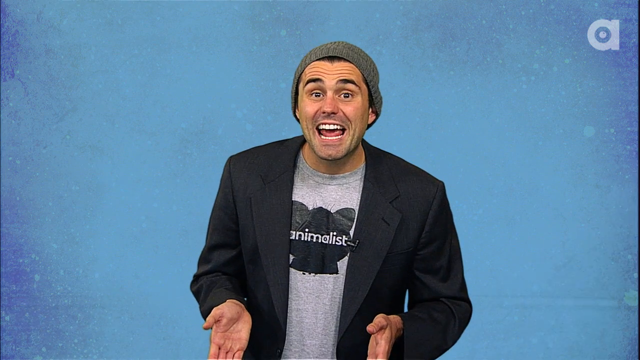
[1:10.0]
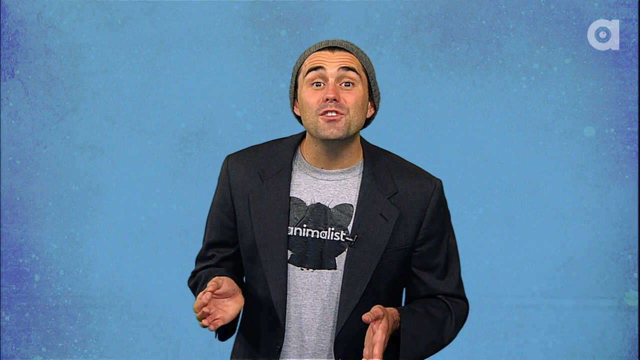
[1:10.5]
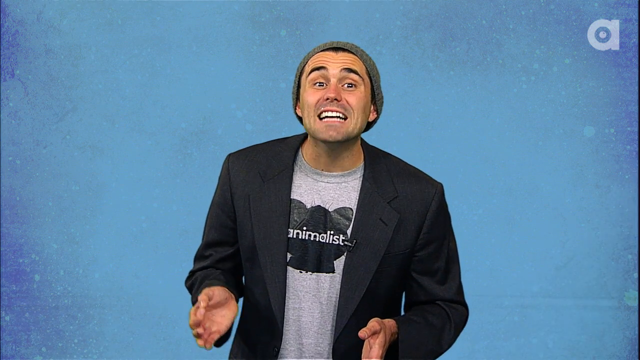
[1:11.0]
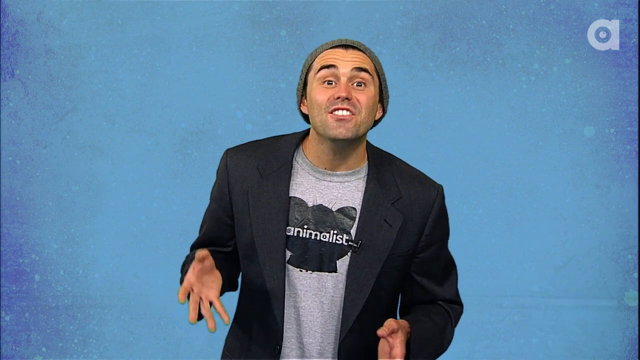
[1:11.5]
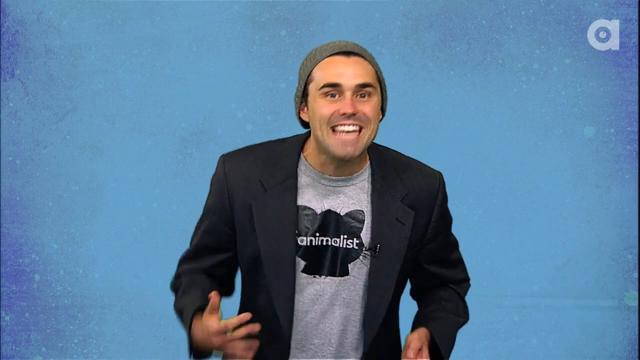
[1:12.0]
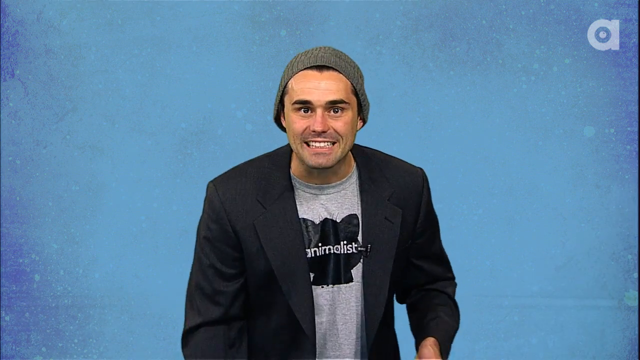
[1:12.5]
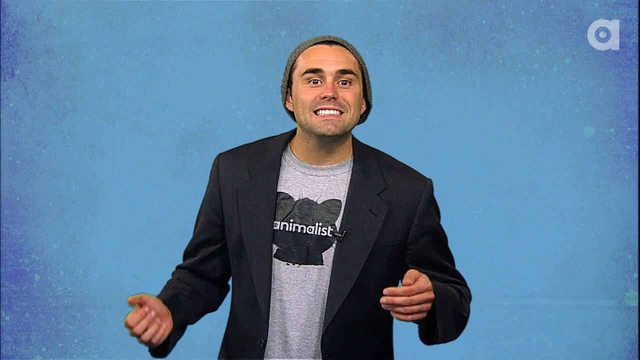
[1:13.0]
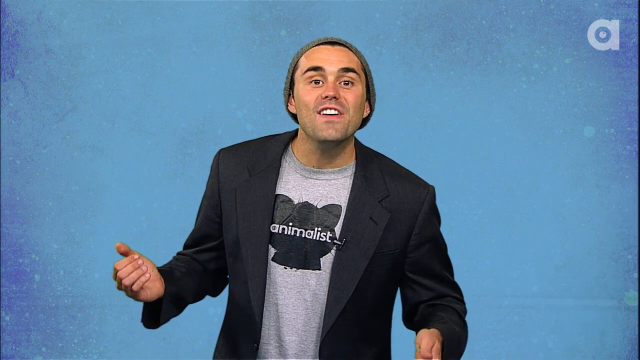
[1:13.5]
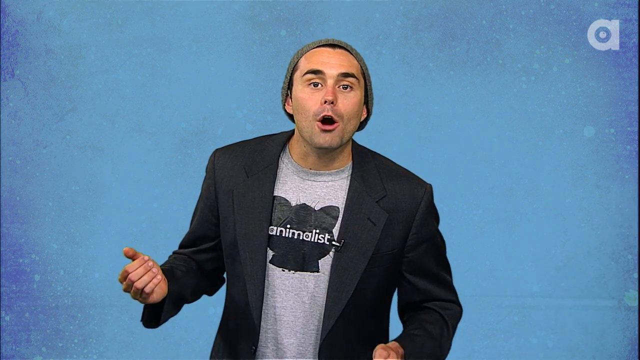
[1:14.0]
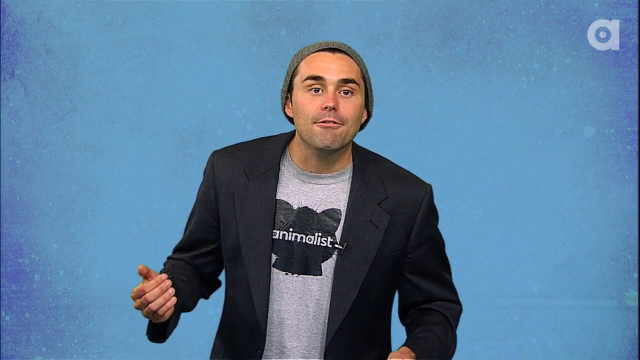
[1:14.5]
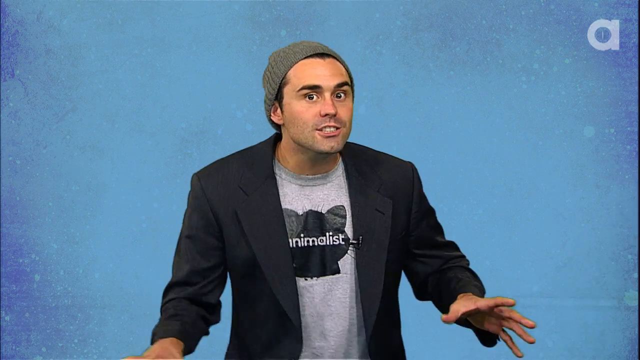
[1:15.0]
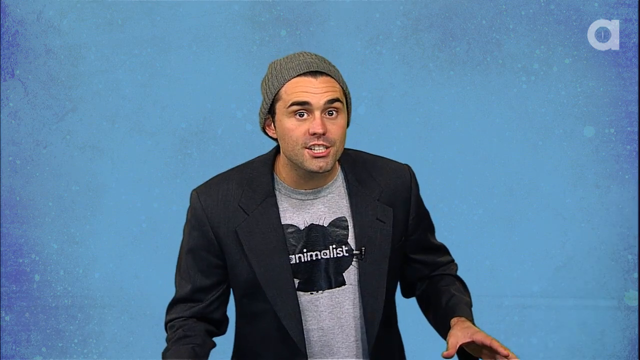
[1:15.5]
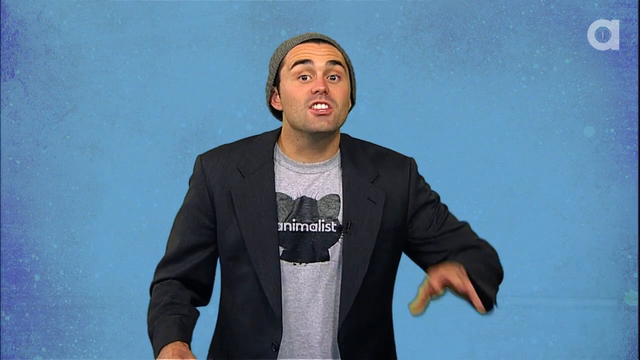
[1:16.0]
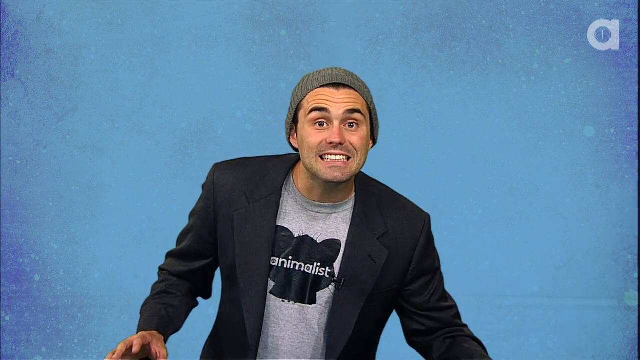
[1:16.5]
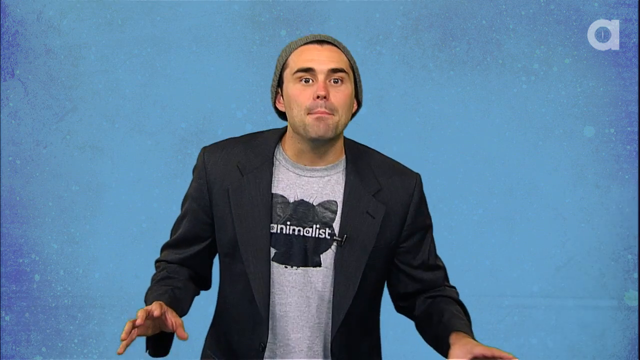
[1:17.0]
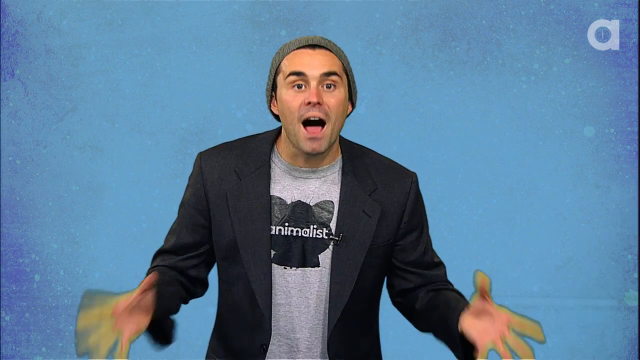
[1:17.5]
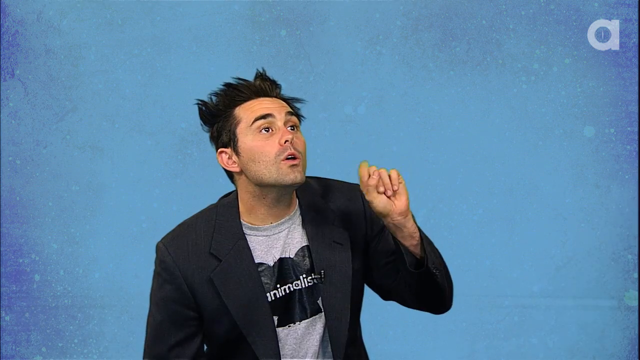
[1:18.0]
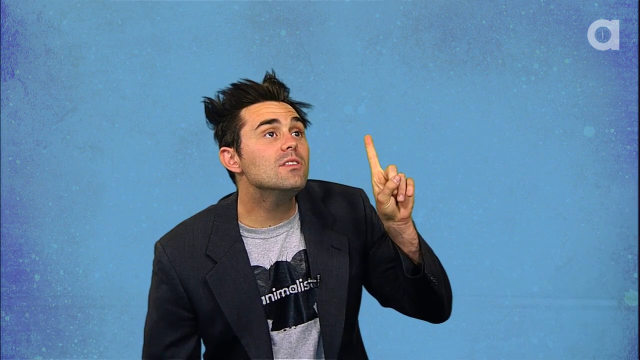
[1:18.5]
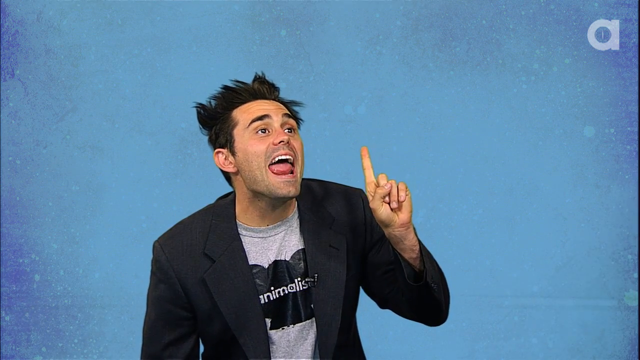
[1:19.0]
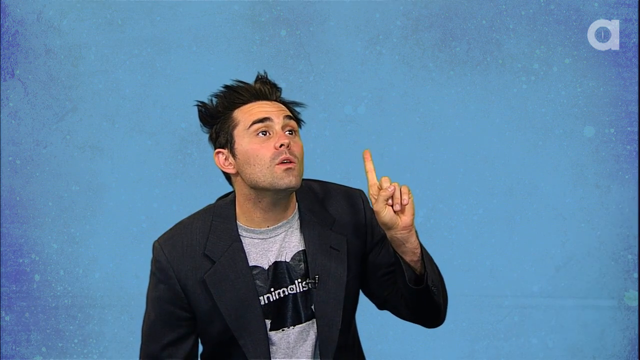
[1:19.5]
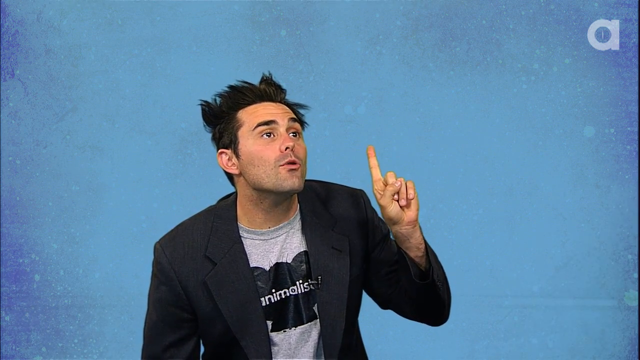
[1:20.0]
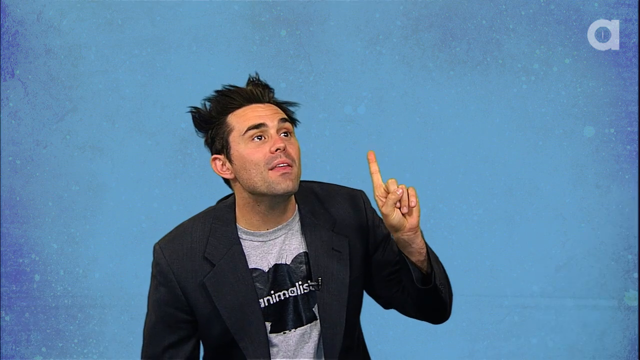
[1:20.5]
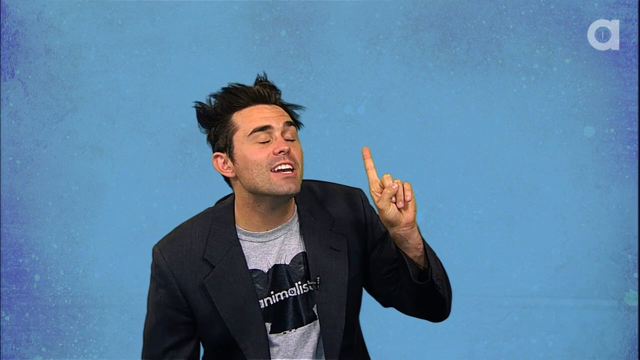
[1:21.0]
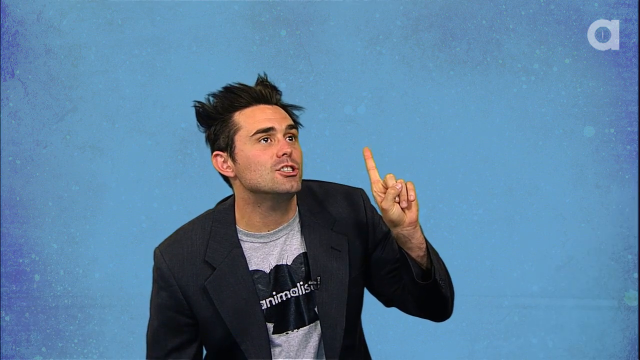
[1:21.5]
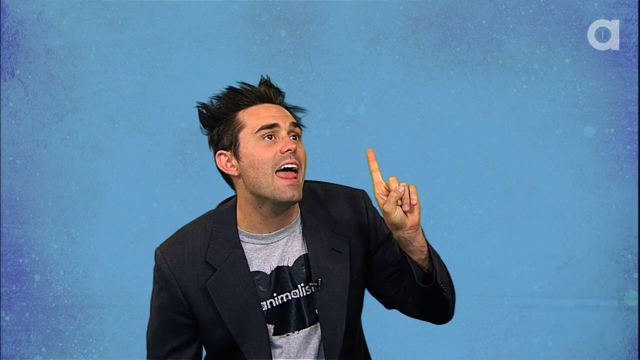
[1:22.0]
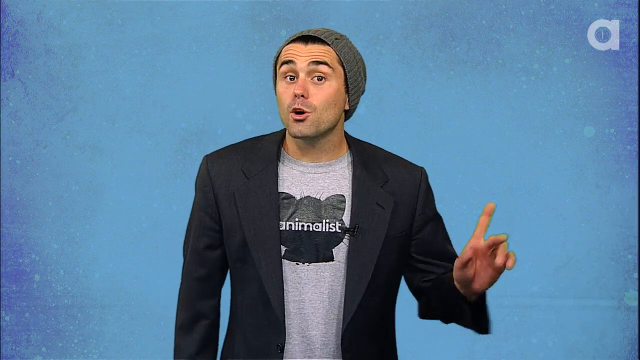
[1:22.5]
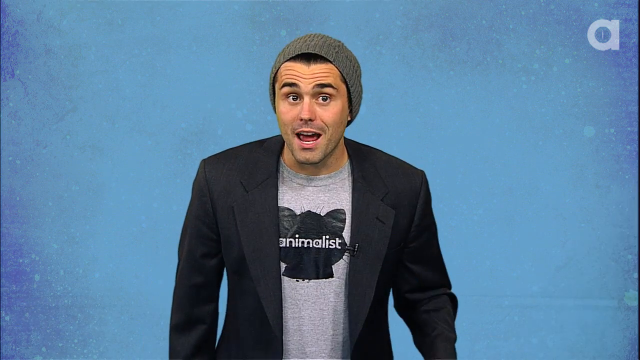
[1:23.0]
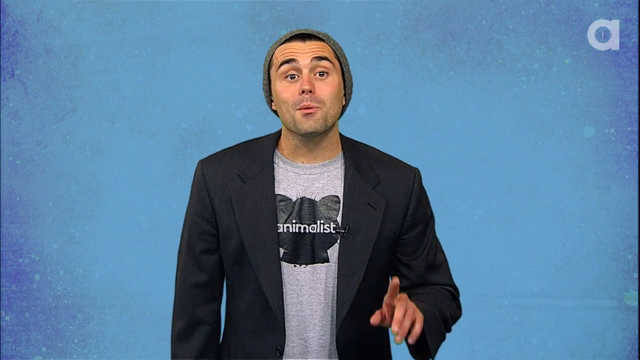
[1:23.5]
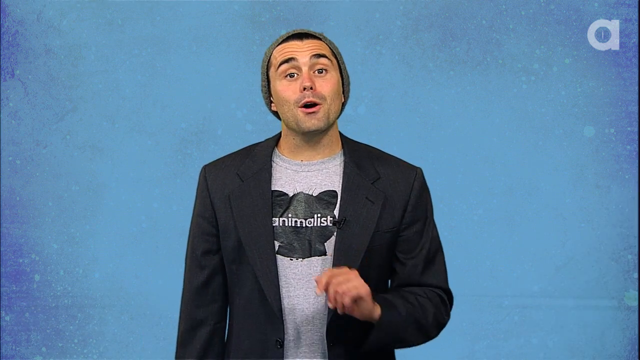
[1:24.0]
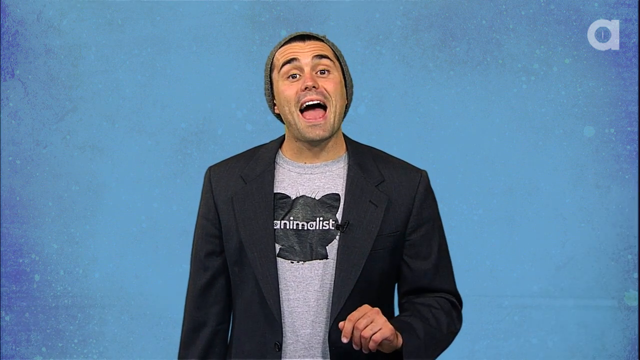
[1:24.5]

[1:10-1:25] The host is against the blue screen, gesturing wildly and speaking animatedly. A shot then shows him in front of the blue screen with his beanie removed: his hair is very short, very dark black and sticking straight up. He leans down as if he were short and looks up toward the top right of the frame, as if speaking to someone much taller. It cuts back to him gesturing wildly and explaining, going back and forth with himself and speaking while looking up toward the top right. A small graphic in the bottom right corner shows a black square with a white silhouette of a deer, and a lowercase a appears in the top left.